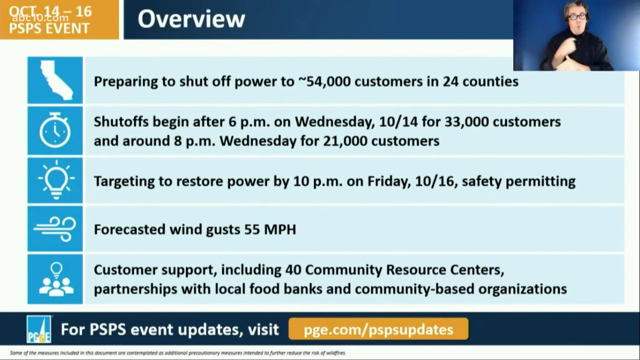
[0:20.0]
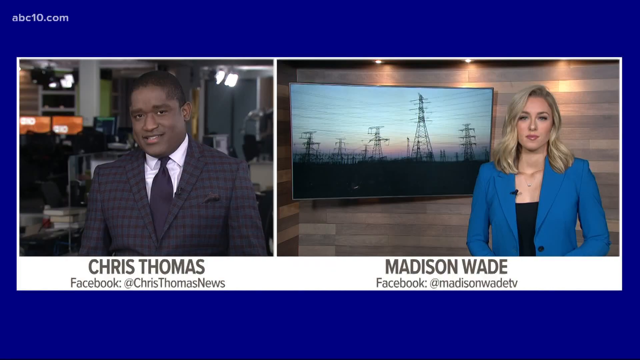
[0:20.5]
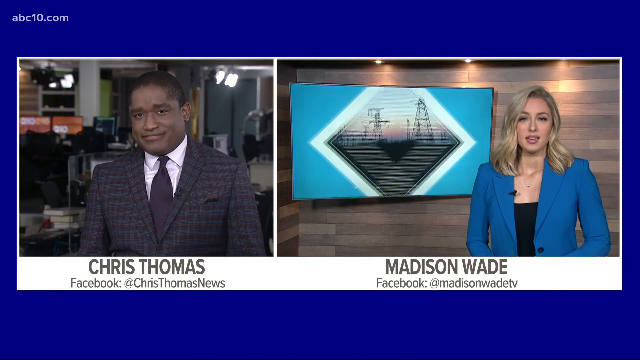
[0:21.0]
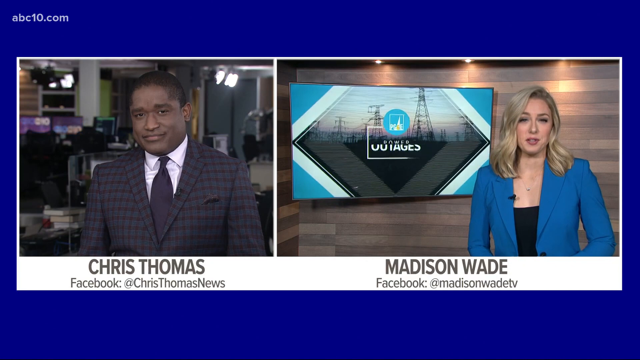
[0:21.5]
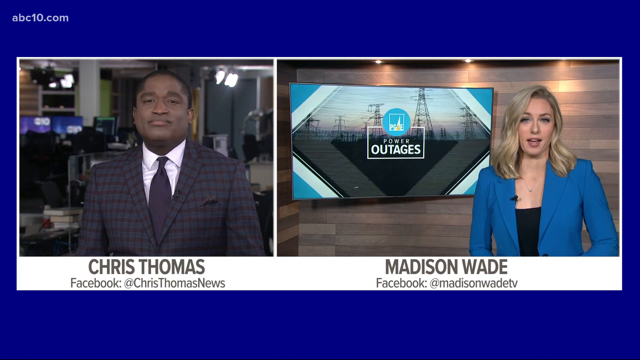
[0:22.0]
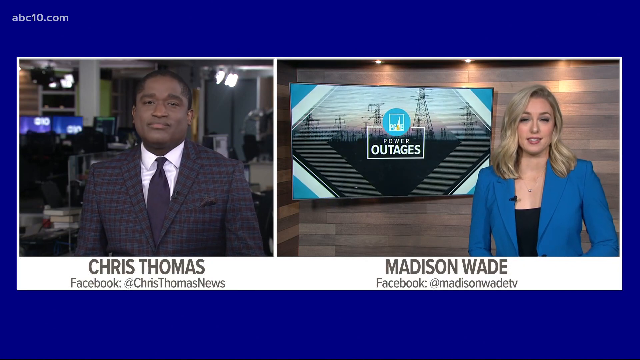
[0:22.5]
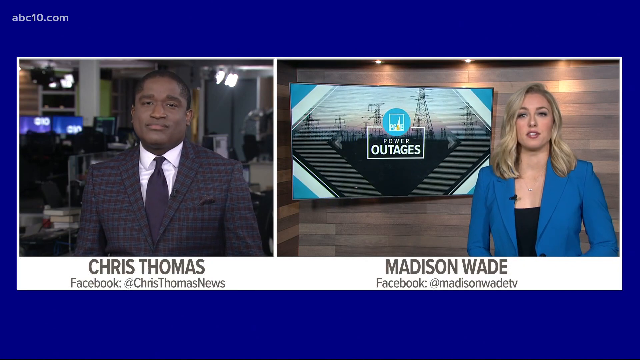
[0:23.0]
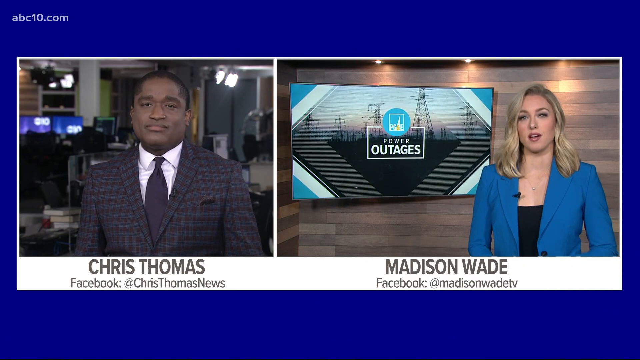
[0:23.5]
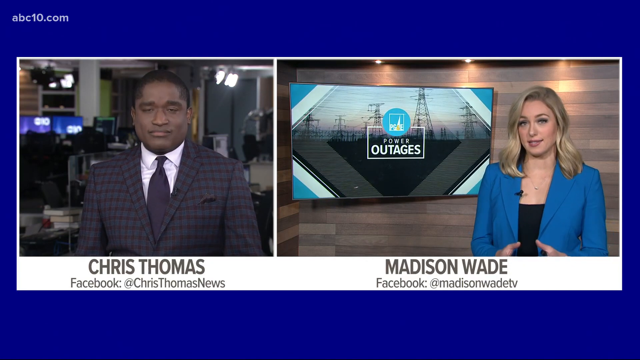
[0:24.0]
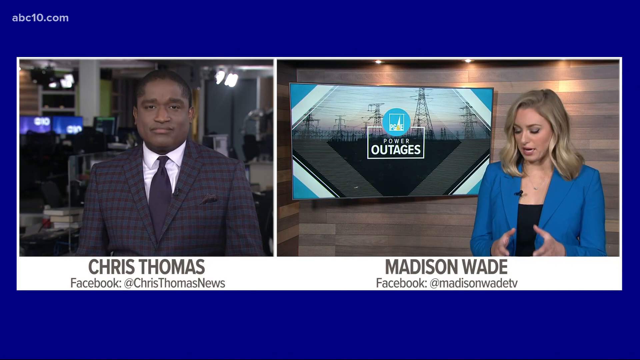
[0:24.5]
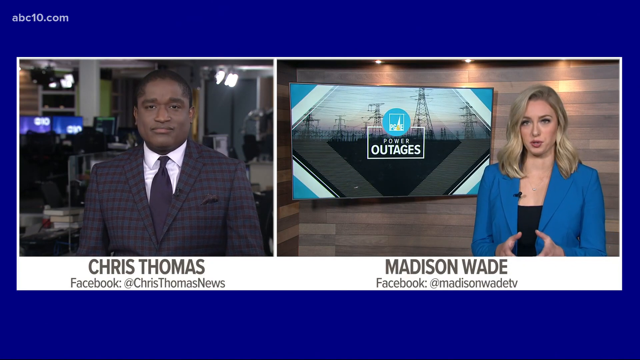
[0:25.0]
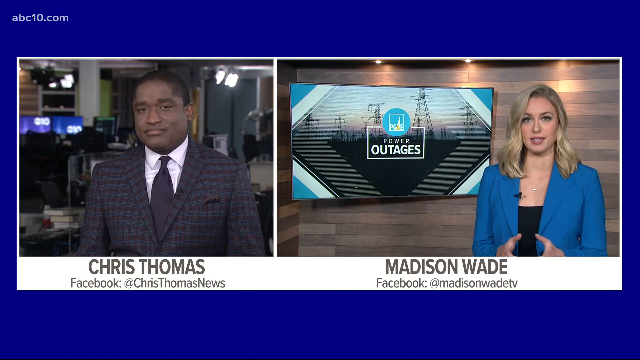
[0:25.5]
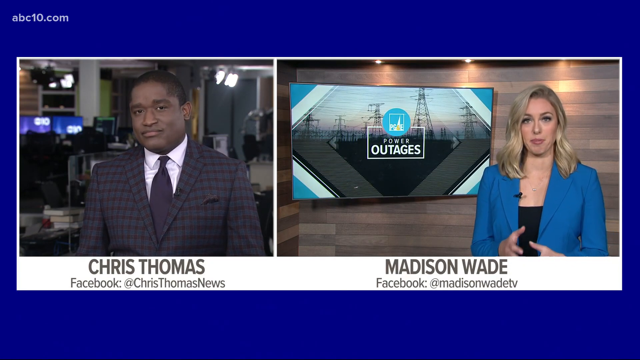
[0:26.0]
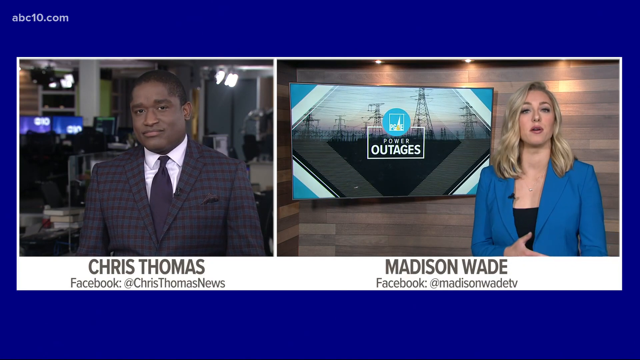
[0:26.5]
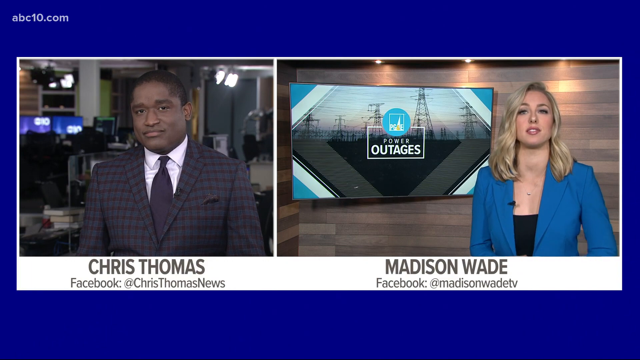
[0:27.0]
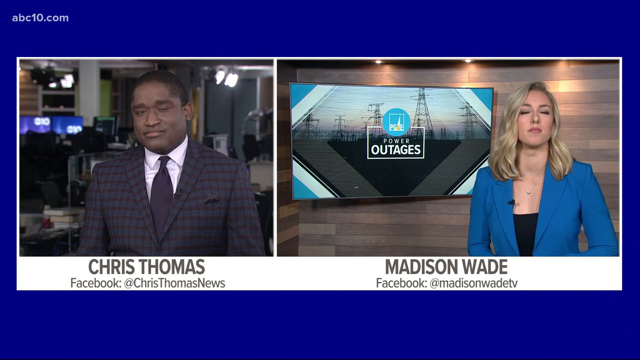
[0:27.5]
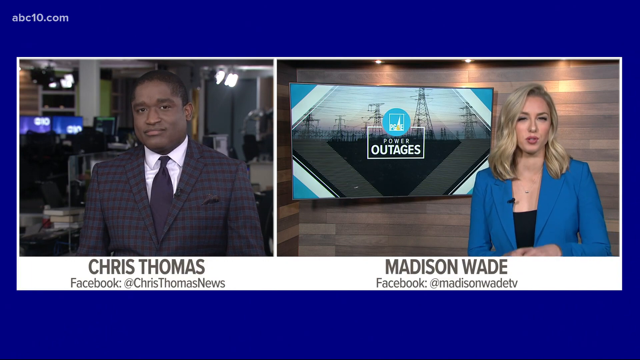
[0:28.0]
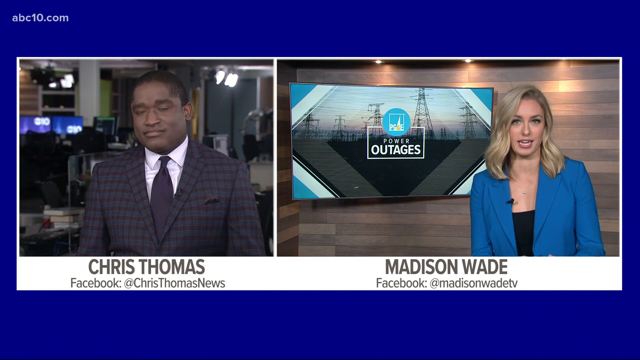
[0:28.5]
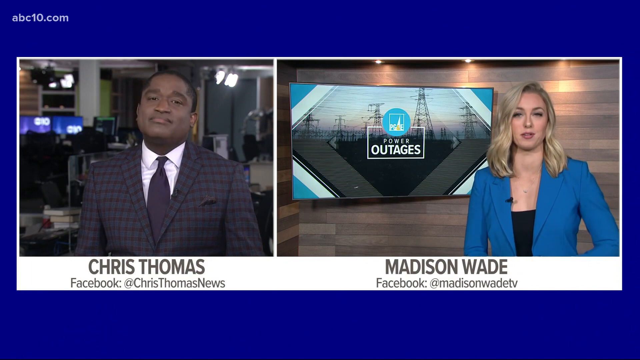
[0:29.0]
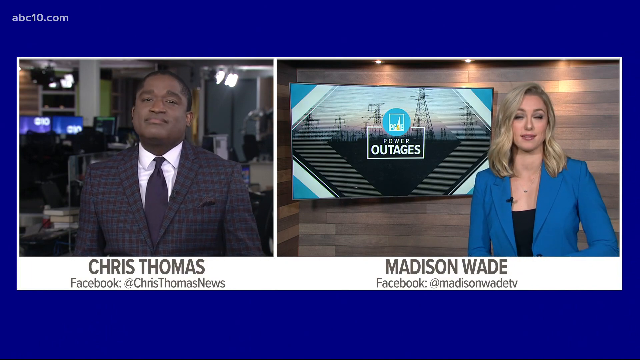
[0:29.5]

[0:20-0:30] The overview page quickly transitions to two newscasters shown side by side in two large box windows, recorded in two different locations. On the right is a woman, Madison Wade, wearing a blue blazer with a black shirt and a lapel microphone; over her right shoulder is an image or screen of the power outages announcement with power signs in the background. On the left is a black man, Chris Thomas, wearing a white shirt, a black tie and a dark gray jacket that is closed; he appears to be in a newsroom, with the newsroom in the backdrop. Beneath both of their images are their Facebook sites and email contact information. They are talking to each other: the woman is speaking while Chris nods back and forth.